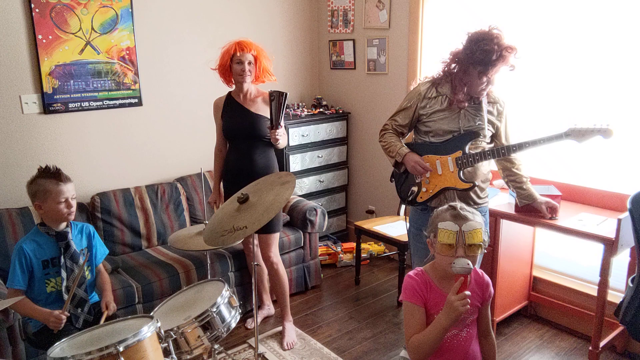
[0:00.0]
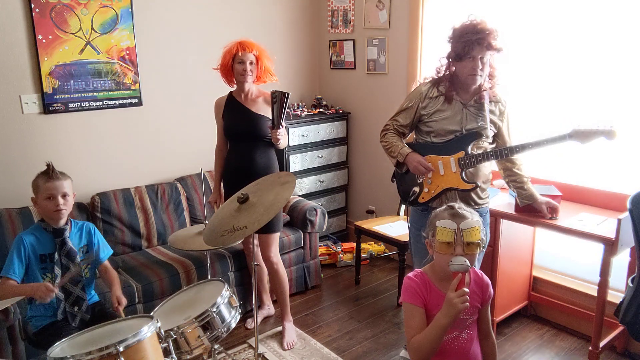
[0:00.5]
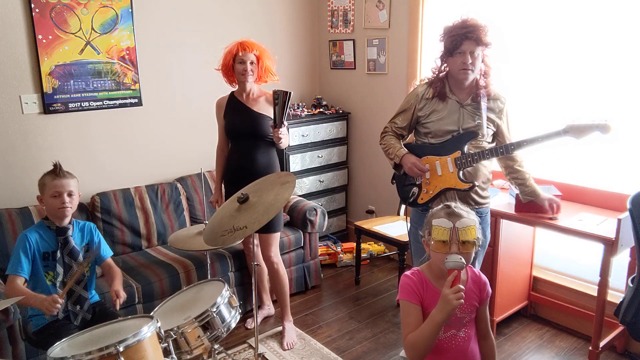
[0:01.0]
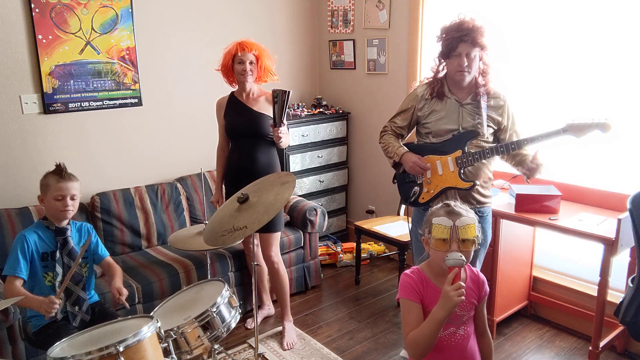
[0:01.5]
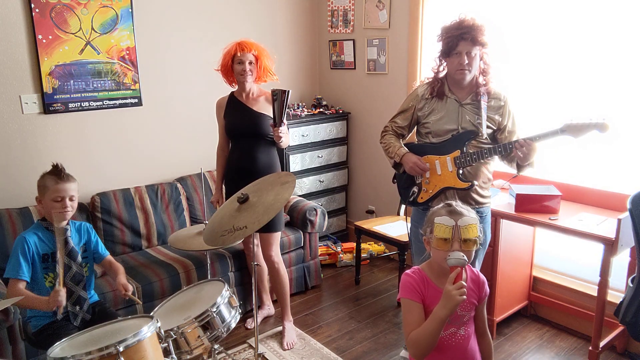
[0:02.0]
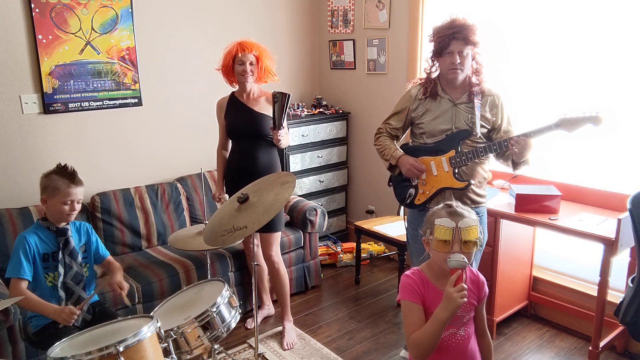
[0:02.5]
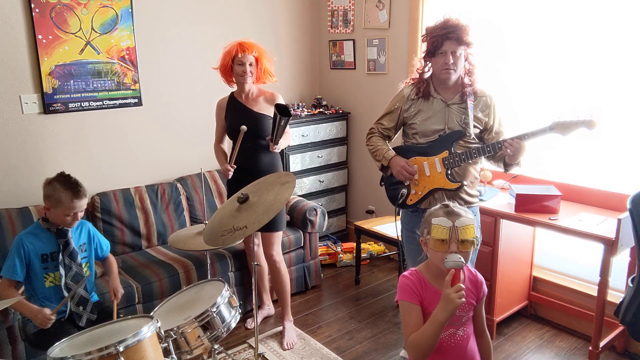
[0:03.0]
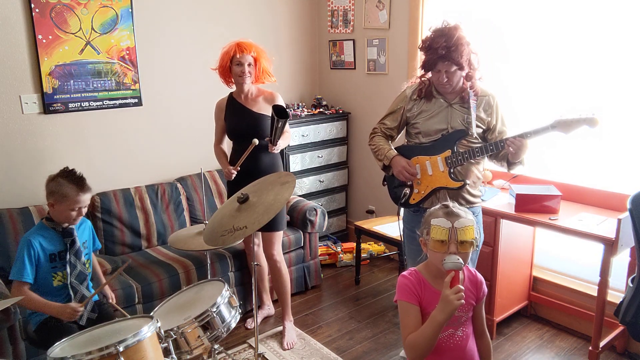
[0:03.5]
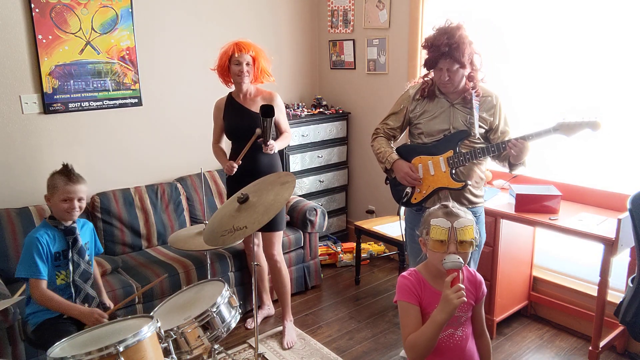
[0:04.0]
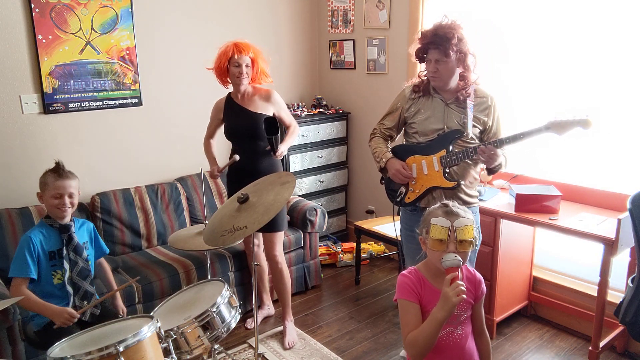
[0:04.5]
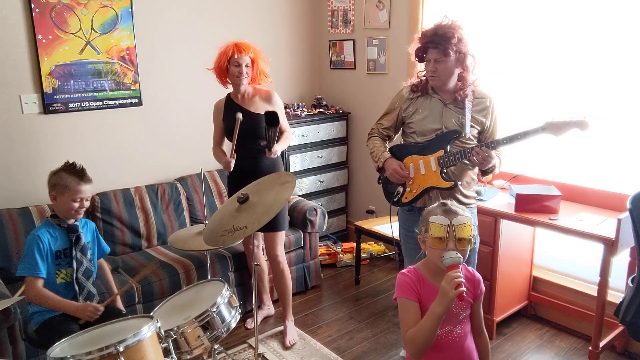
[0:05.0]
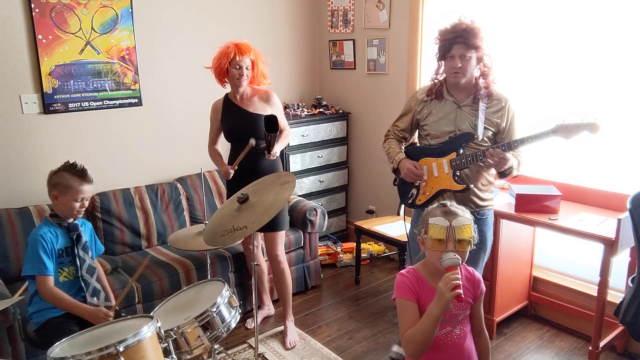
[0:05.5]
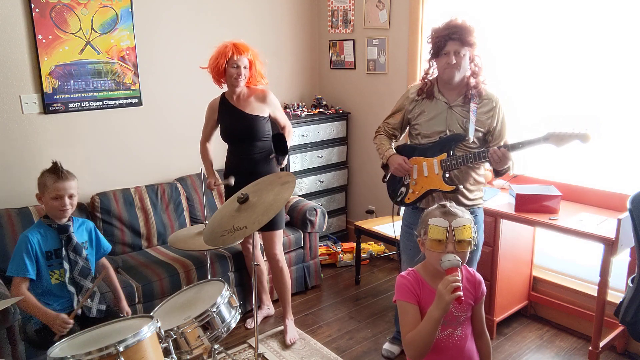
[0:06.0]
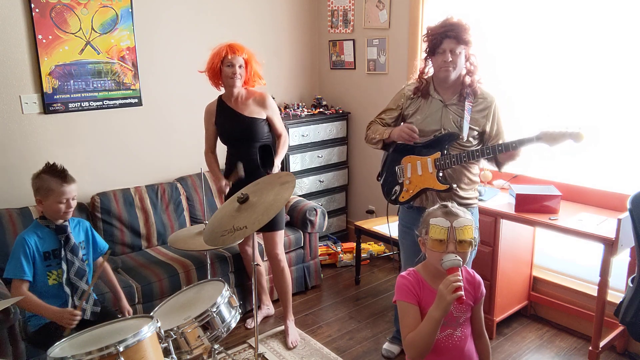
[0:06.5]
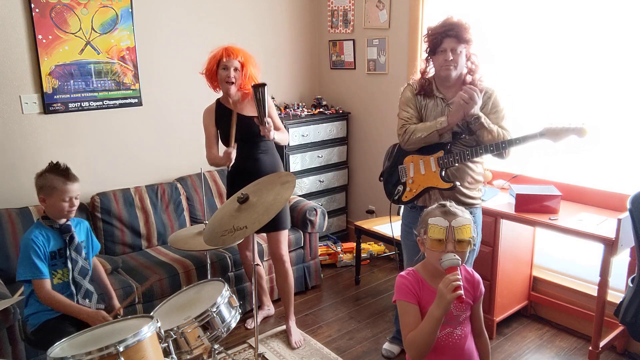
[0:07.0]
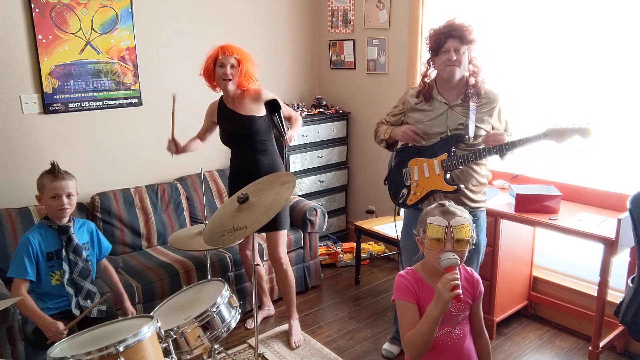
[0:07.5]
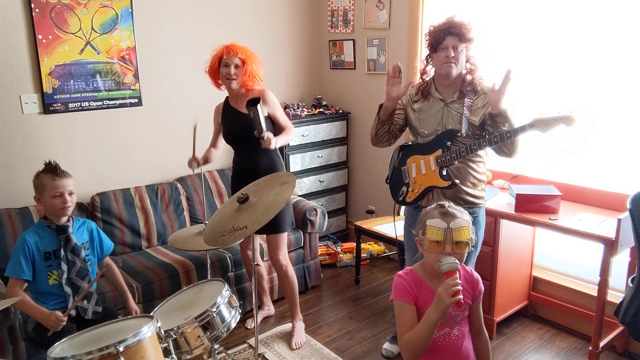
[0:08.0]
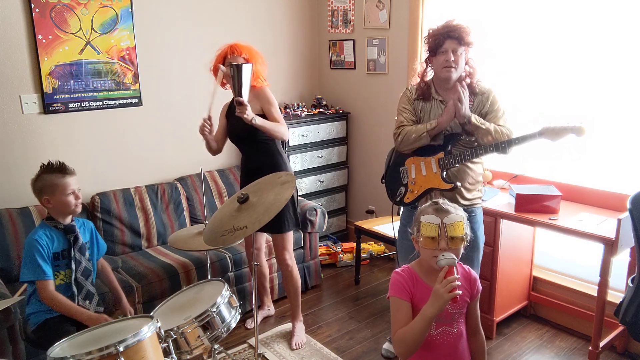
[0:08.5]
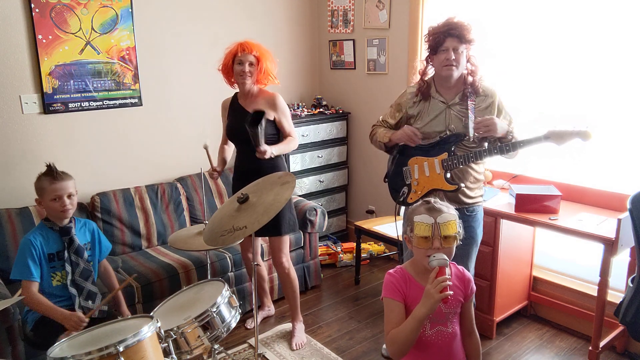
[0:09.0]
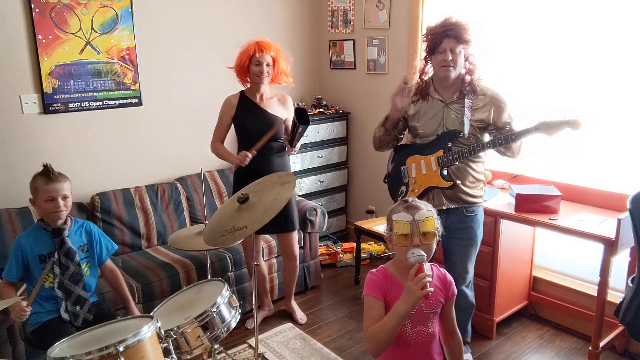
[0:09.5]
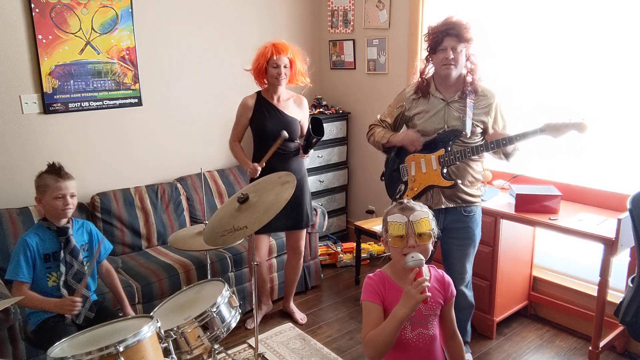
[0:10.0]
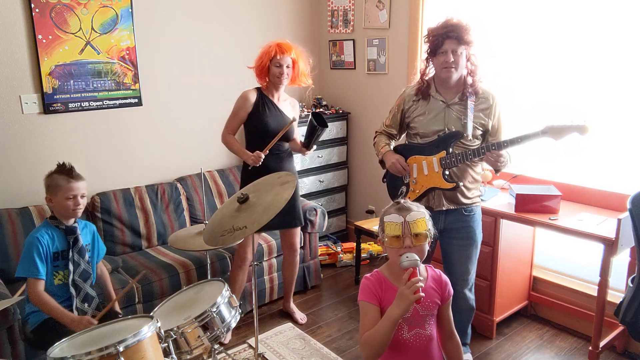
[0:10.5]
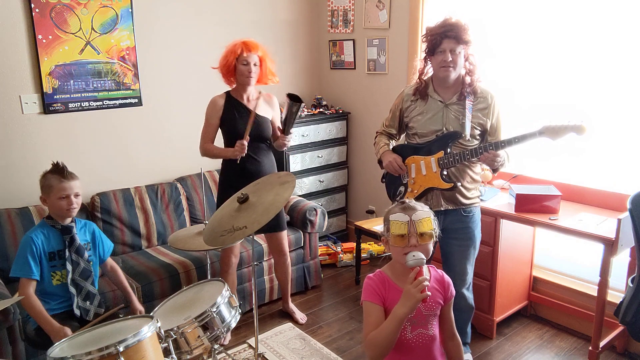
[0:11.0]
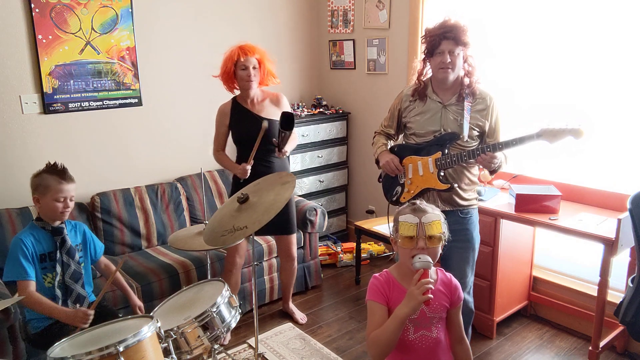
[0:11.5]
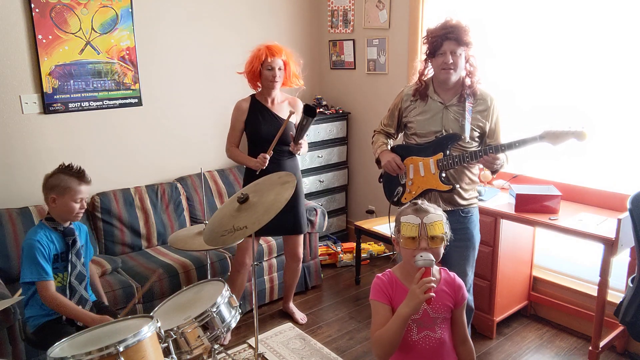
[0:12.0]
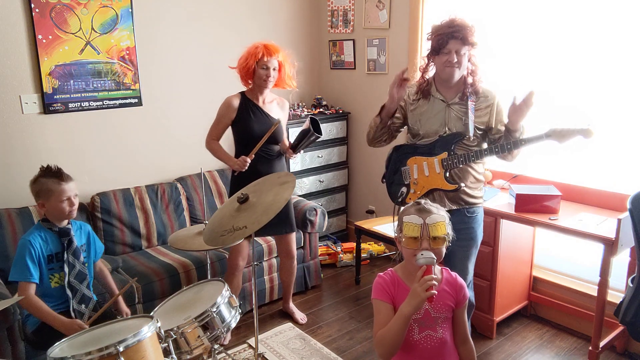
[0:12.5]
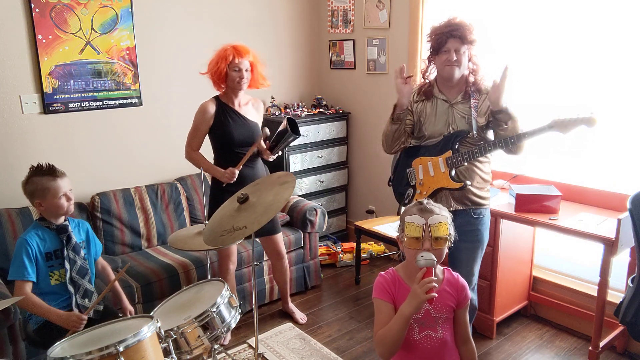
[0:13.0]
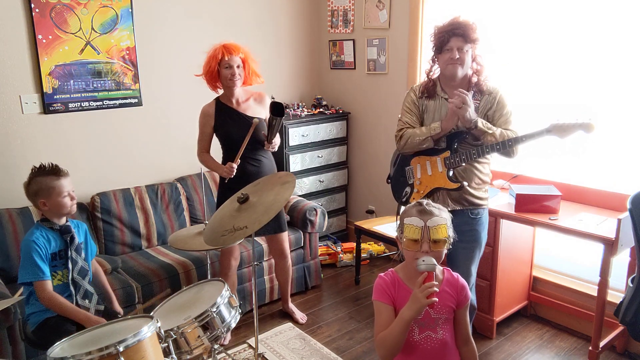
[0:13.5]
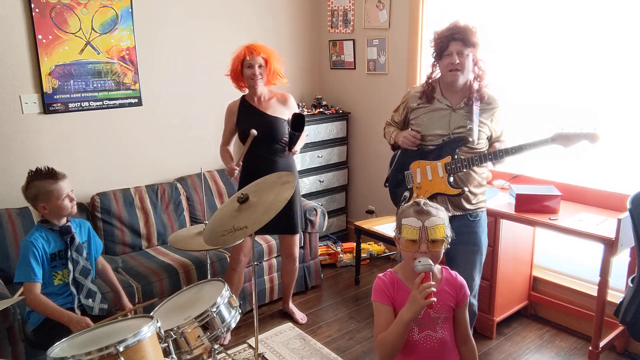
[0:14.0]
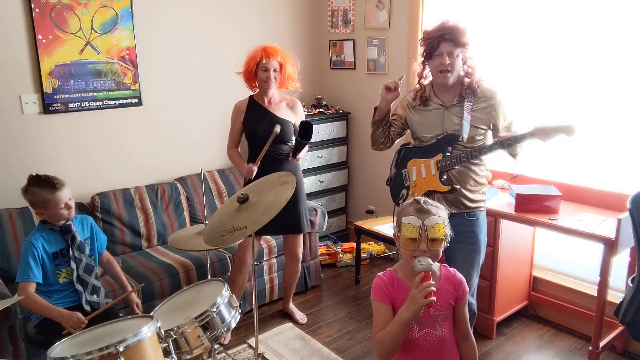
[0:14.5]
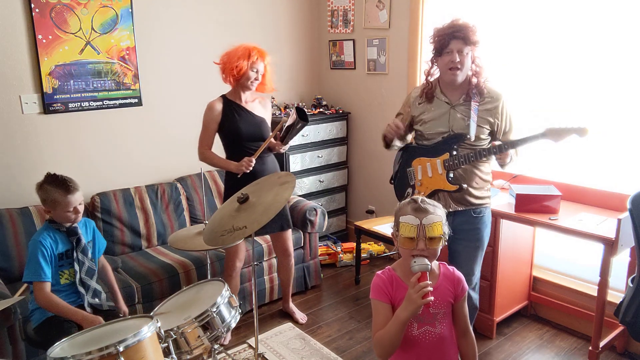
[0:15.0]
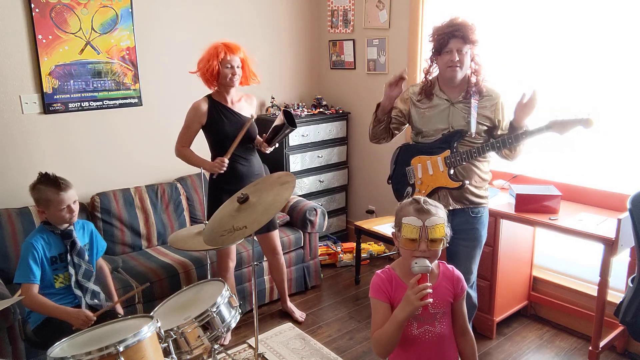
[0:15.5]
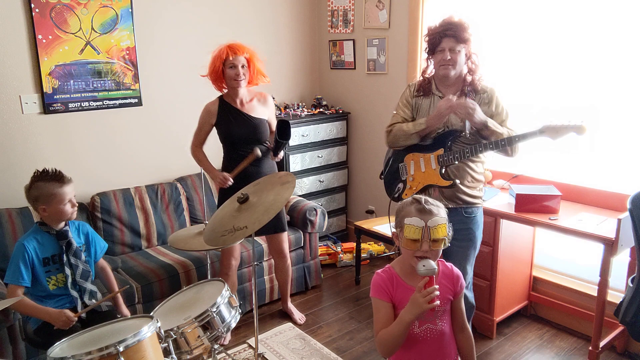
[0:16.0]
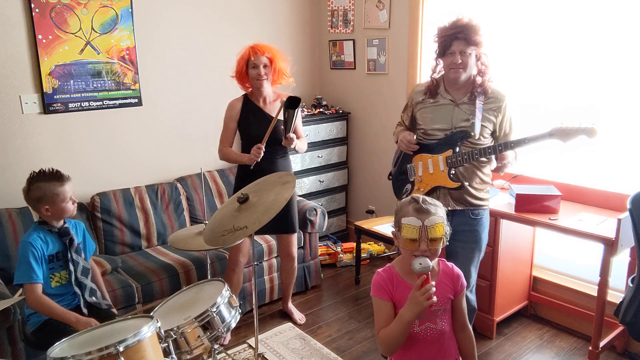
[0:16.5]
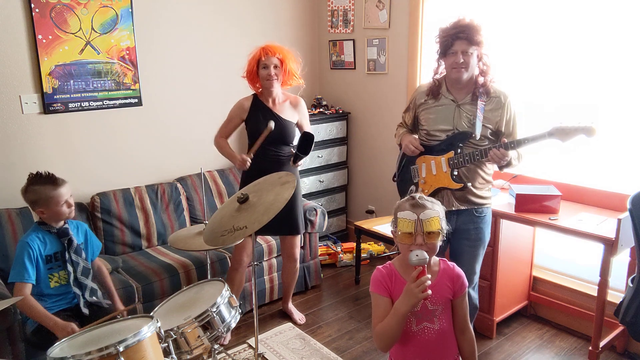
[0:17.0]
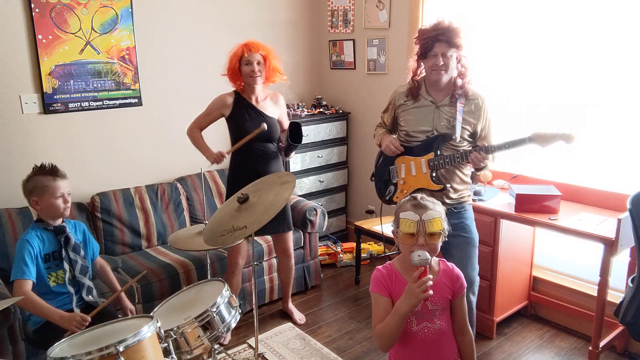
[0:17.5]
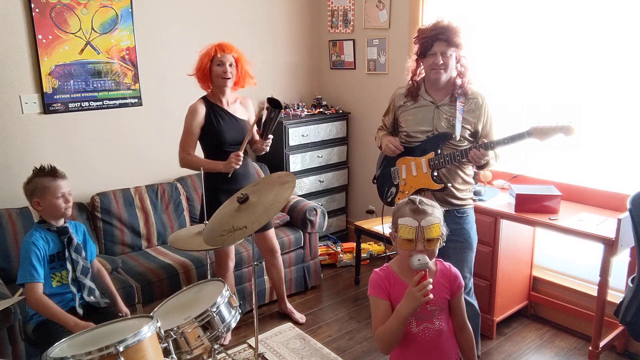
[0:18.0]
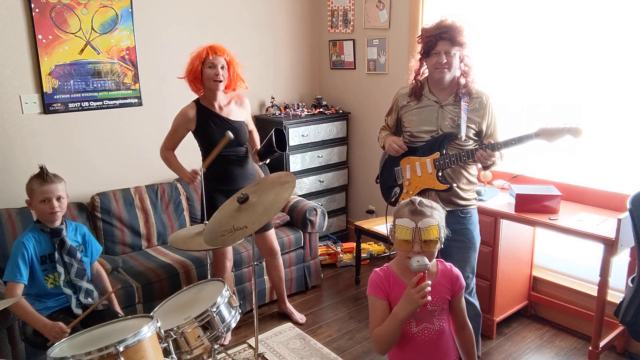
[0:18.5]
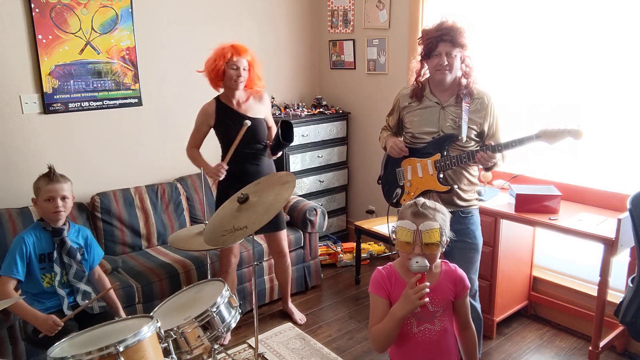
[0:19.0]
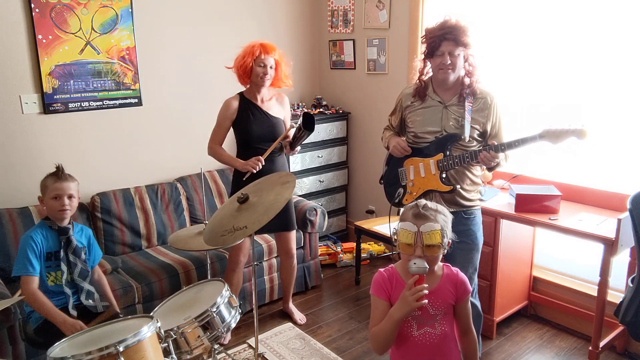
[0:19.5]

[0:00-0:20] What looks like a family band appears to be just having fun. The son has a mohawk and wears a white, dark blue and green tie with a light blue t-shirt; he is at the drums. The mother apparently has an orange wig on and wears a sleeveless black dress. A girl wears glasses that have something like root beer on the lenses. The father has a black and brown electric guitar and a brown curly wig. The boy hits the drums and starts playing, the mom hits some instrument, and the dad claps his hands. The little girl, in a pink shirt with a star outlined in white, appears to be singing. They sing and clap. There is a beige striped couch.